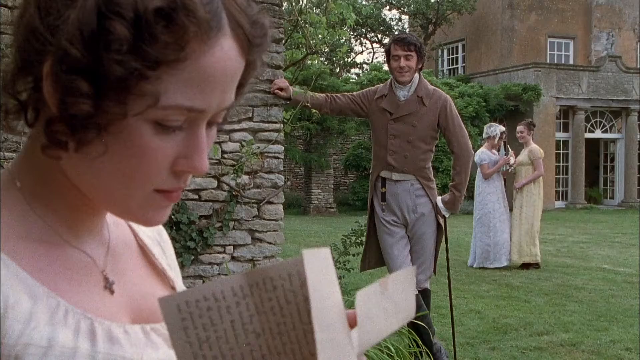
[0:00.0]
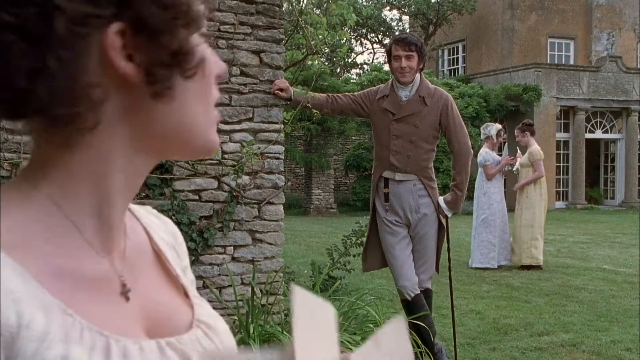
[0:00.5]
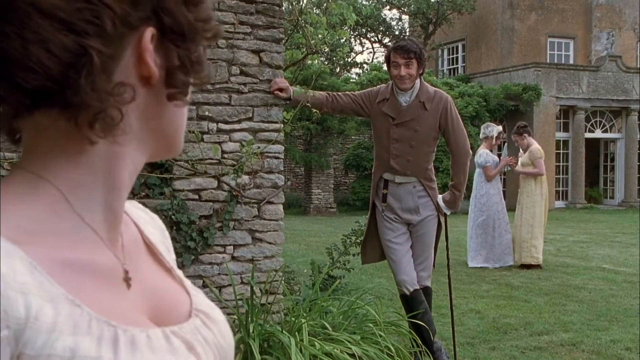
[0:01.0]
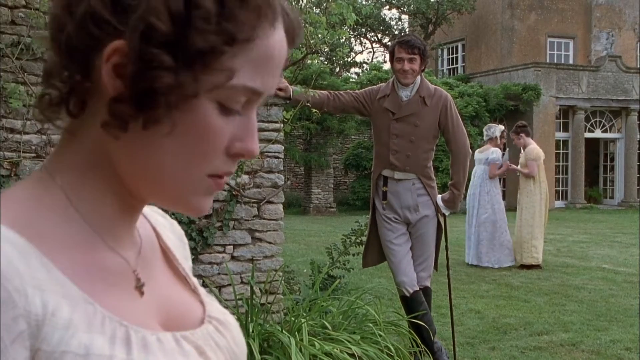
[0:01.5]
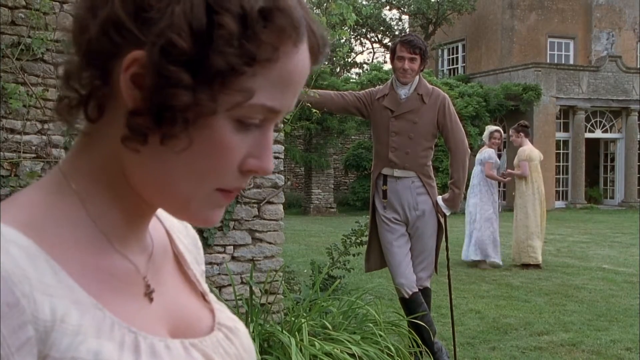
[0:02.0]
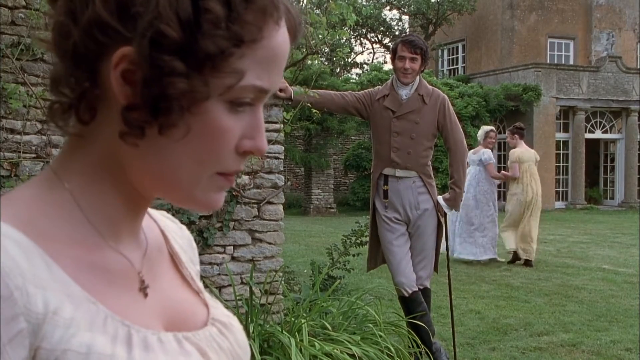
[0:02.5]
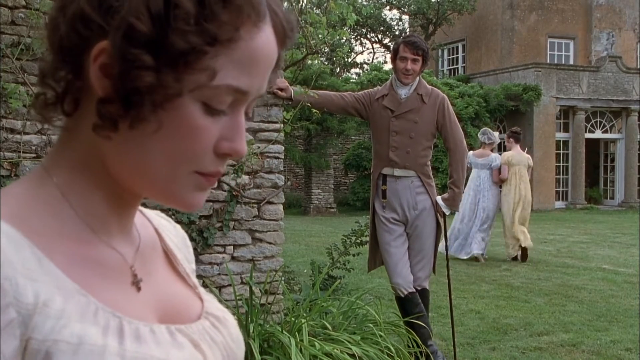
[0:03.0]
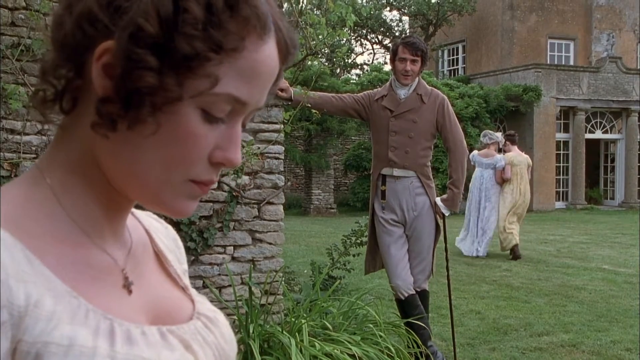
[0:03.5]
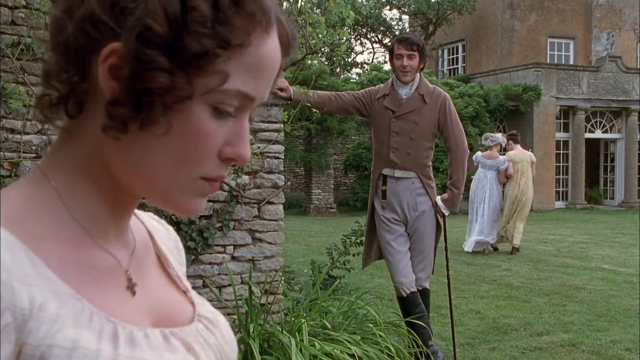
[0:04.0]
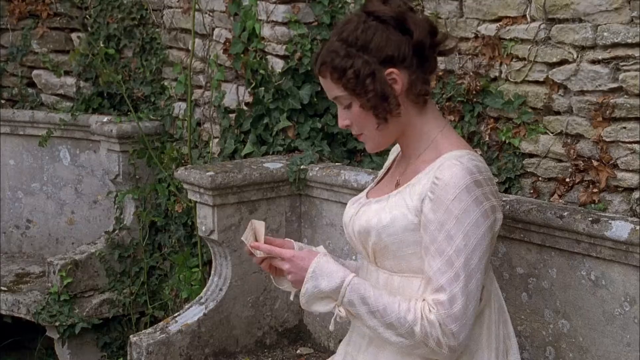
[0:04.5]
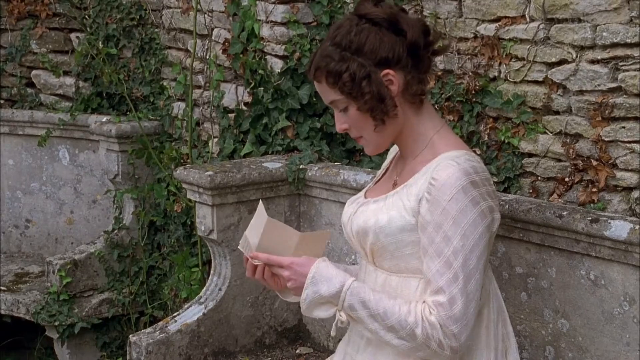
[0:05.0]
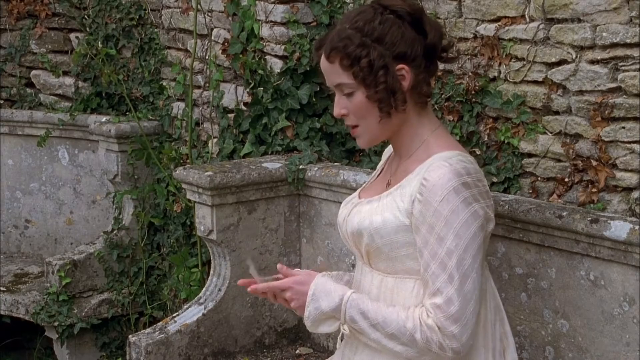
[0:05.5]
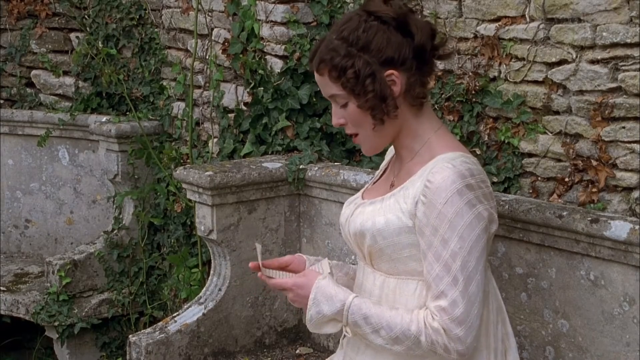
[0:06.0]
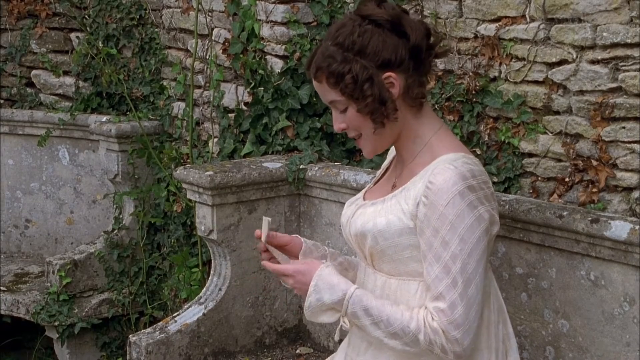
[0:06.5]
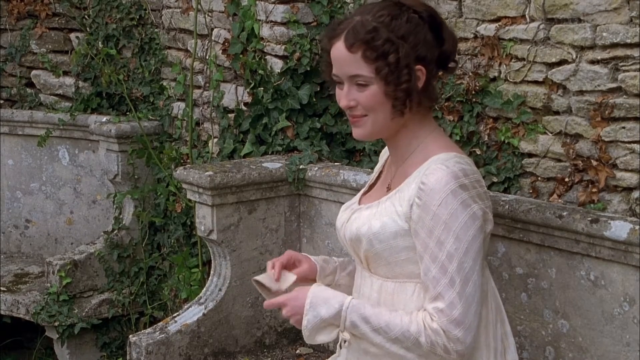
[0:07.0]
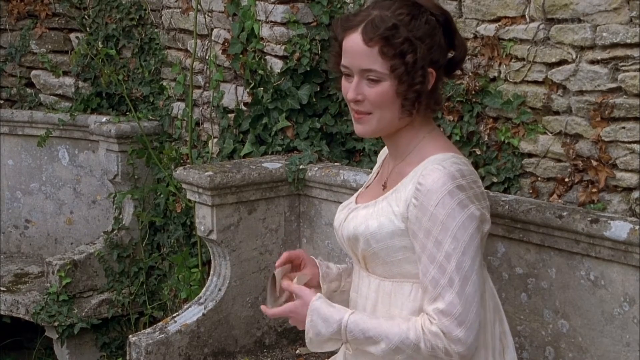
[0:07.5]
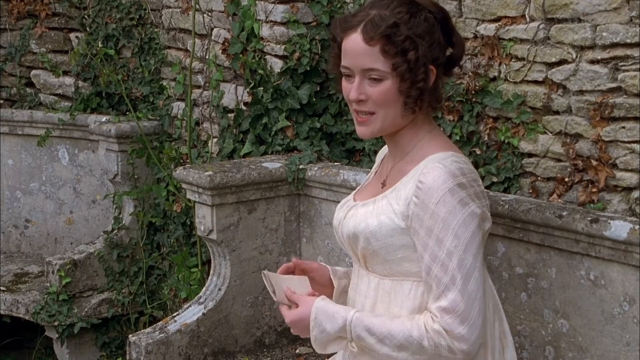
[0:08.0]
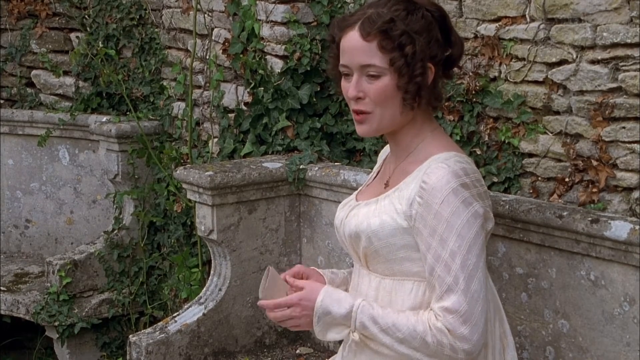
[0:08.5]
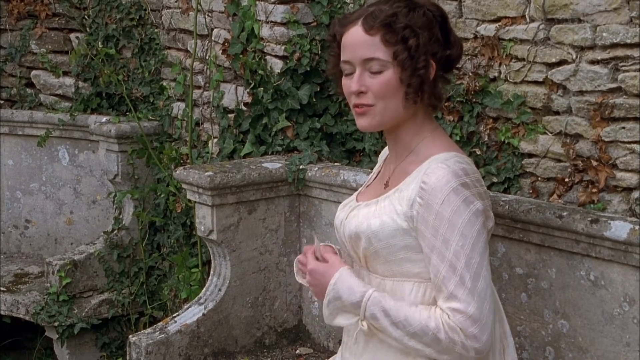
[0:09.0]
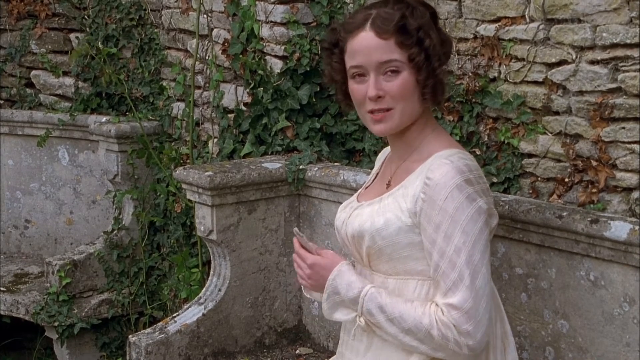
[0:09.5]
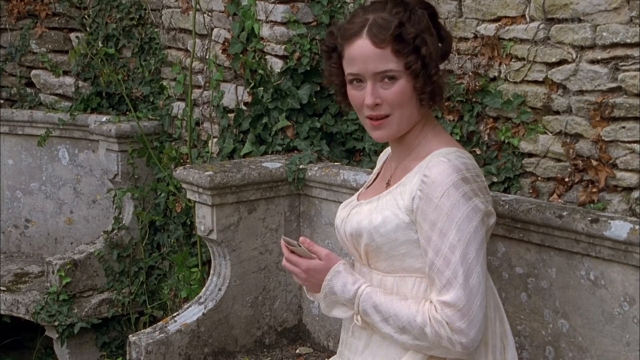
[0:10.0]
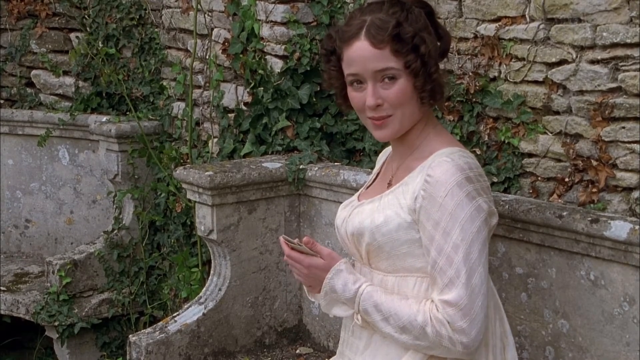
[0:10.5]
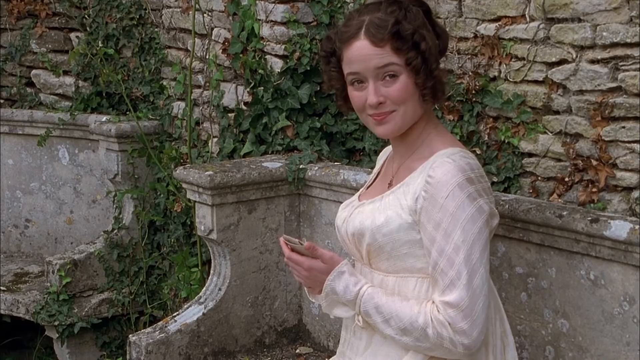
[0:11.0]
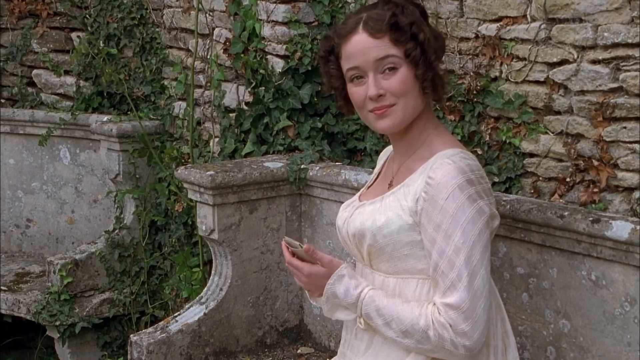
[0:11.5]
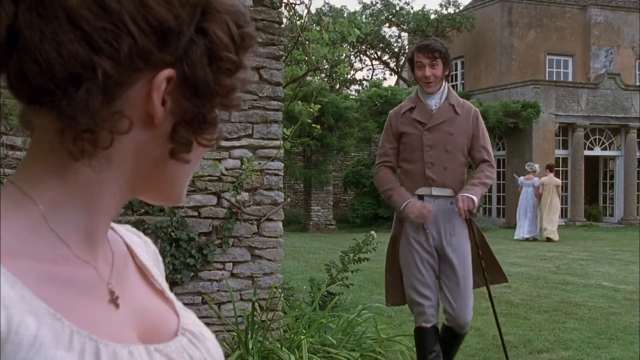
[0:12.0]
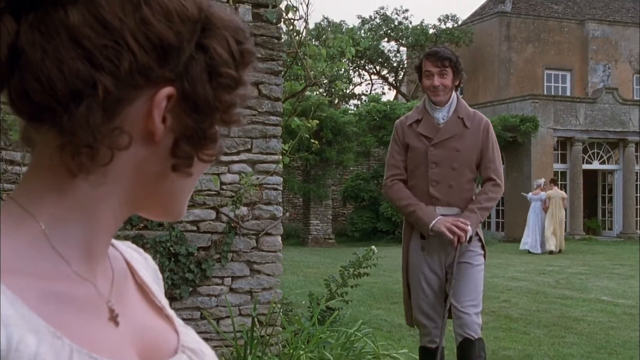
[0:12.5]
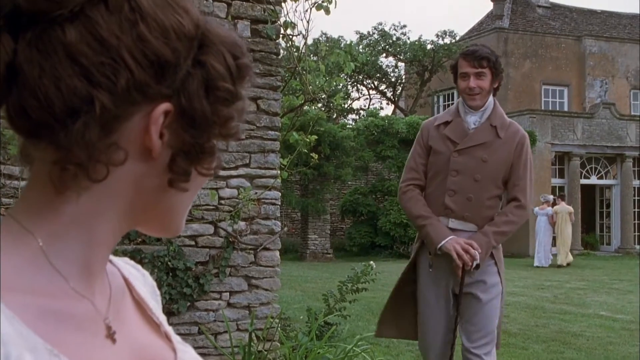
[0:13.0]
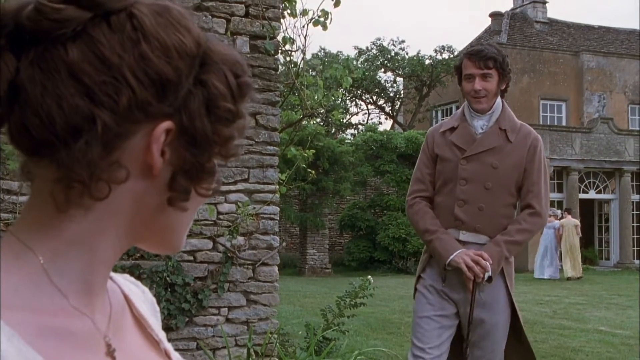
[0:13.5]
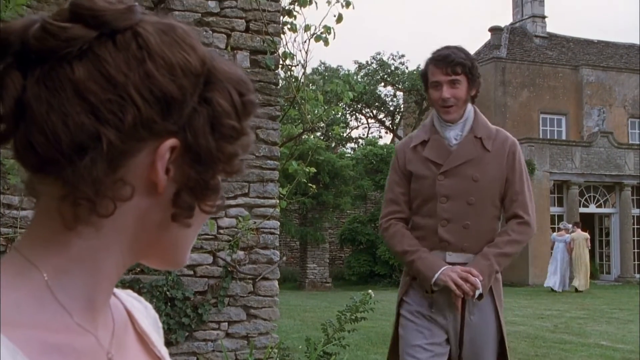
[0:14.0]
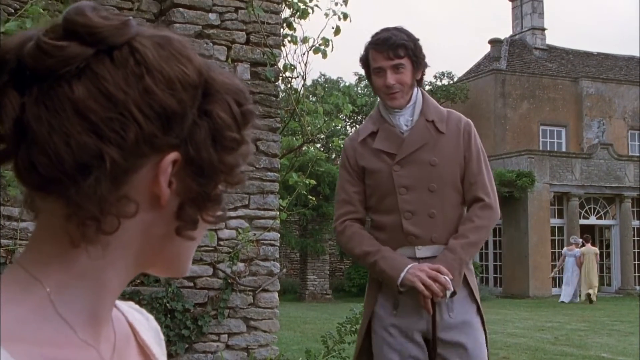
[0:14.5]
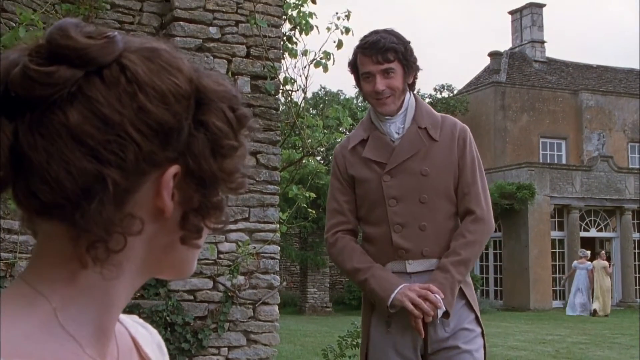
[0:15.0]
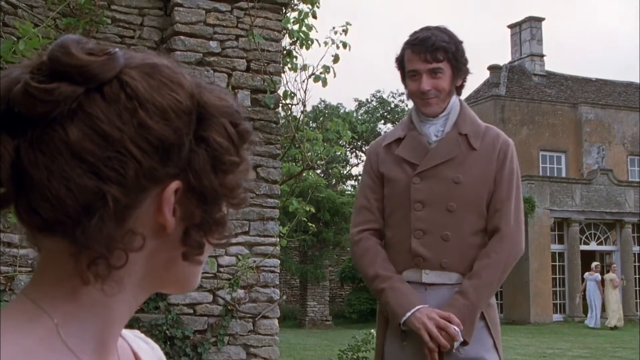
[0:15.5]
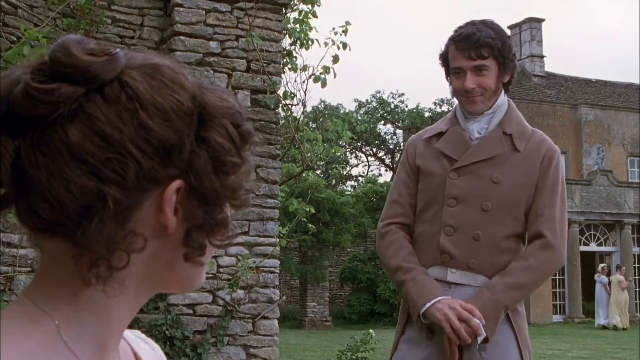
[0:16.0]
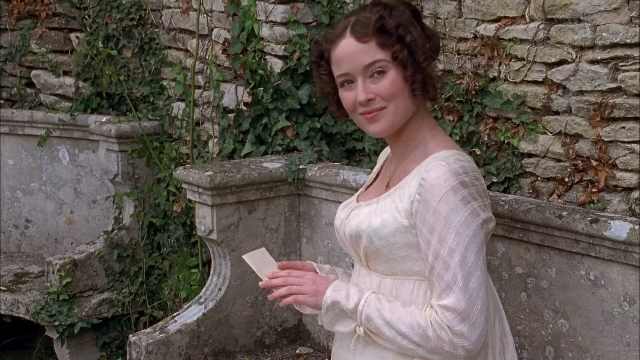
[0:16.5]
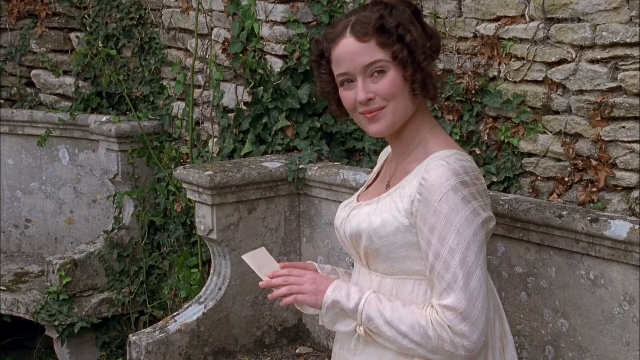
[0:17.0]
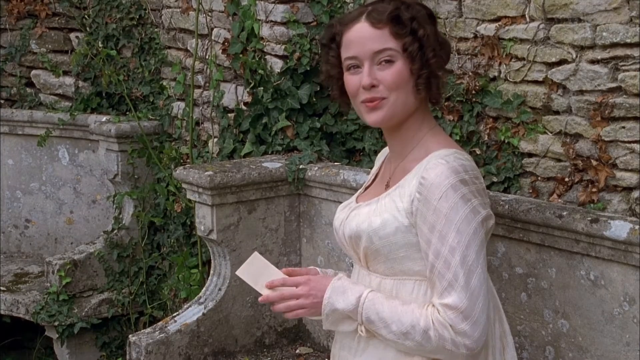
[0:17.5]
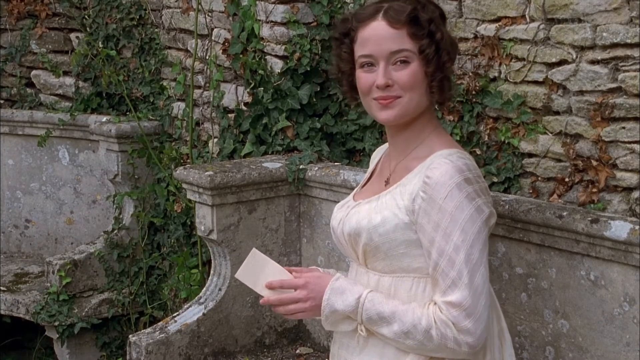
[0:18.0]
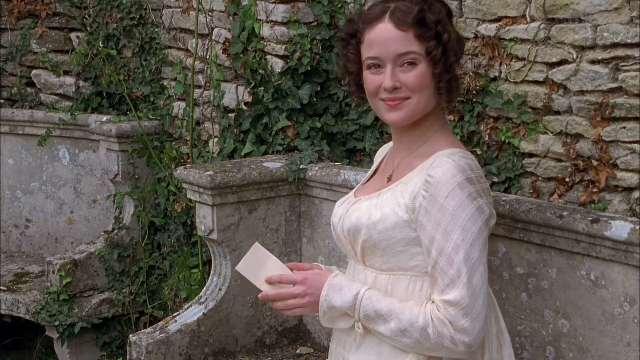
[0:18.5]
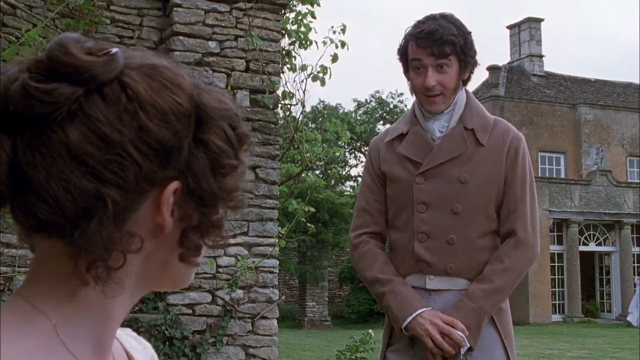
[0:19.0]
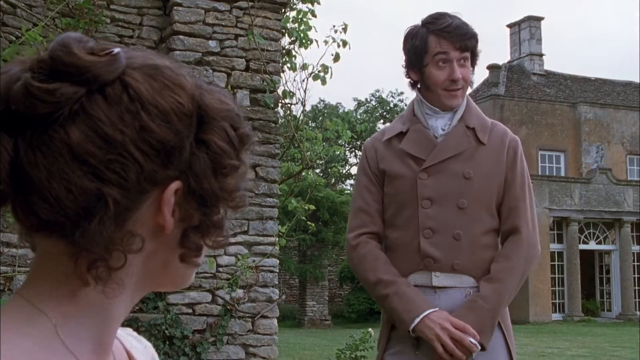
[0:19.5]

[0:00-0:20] A man in old-fashioned attire puts on a long brown jacket and a cowboy shoe, and a lady in a long old-fashioned gown is present. The man raises his hand against a wall while talking to a lady with brown curly hair who is sitting down on cast cement. She holds a kind of letter note in her hand and smiles as they converse. Behind them, two ladies are smiling and walking back inside the building.